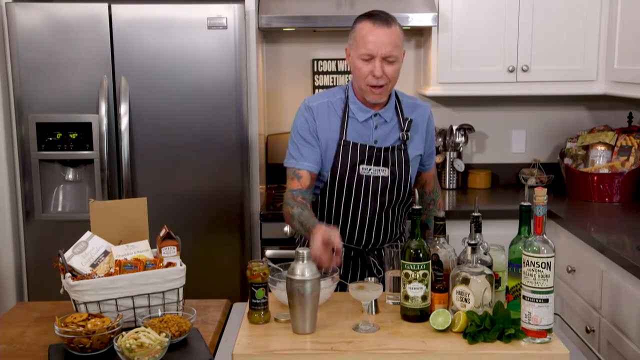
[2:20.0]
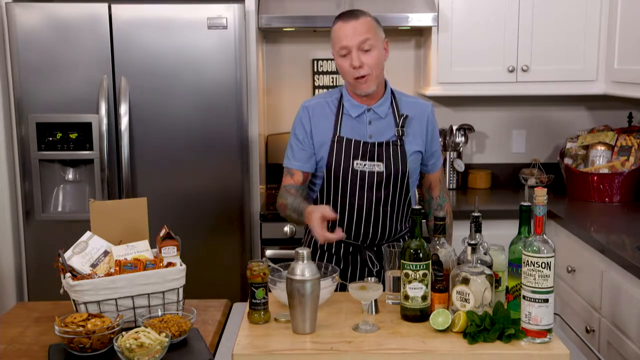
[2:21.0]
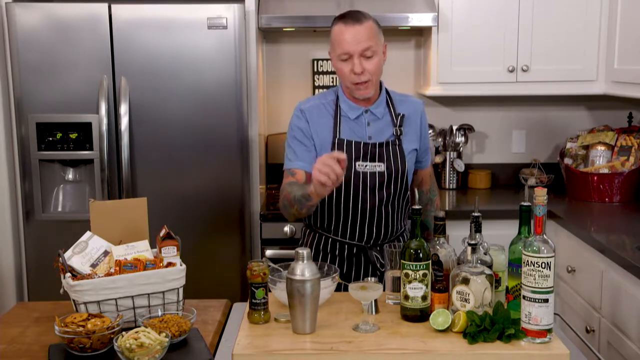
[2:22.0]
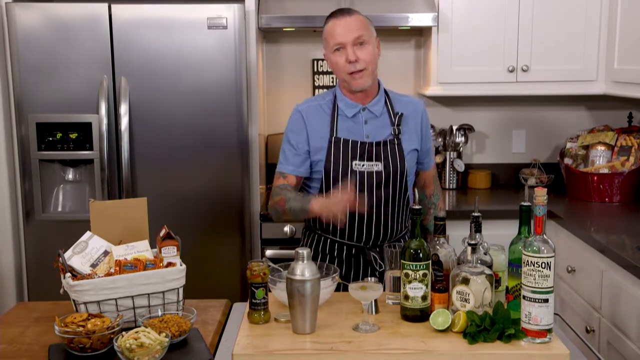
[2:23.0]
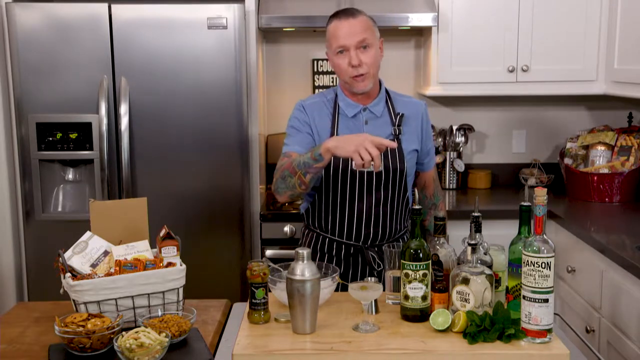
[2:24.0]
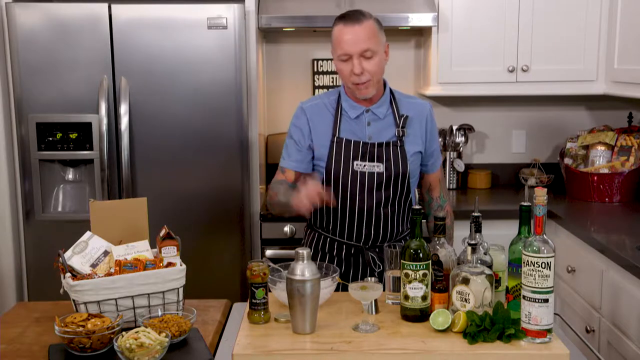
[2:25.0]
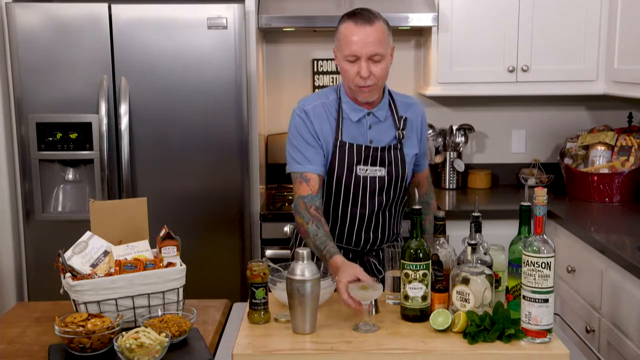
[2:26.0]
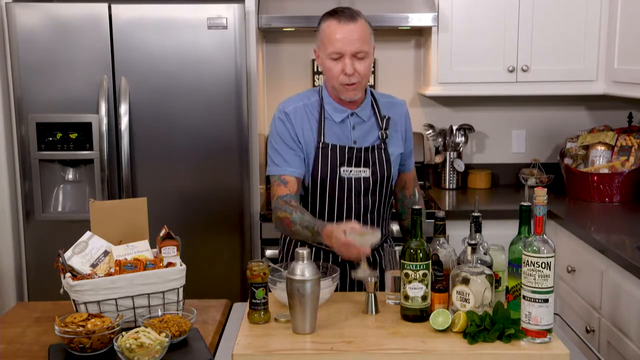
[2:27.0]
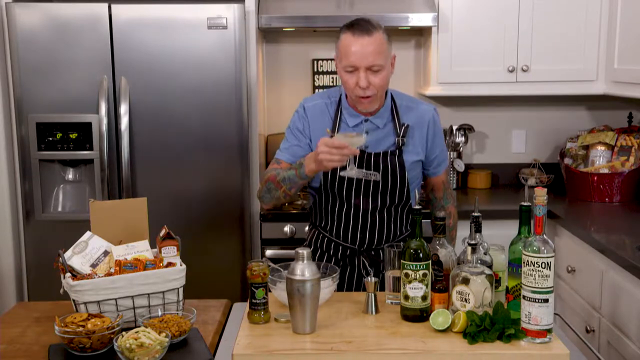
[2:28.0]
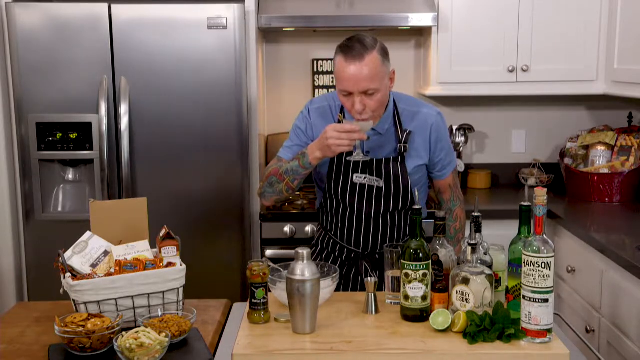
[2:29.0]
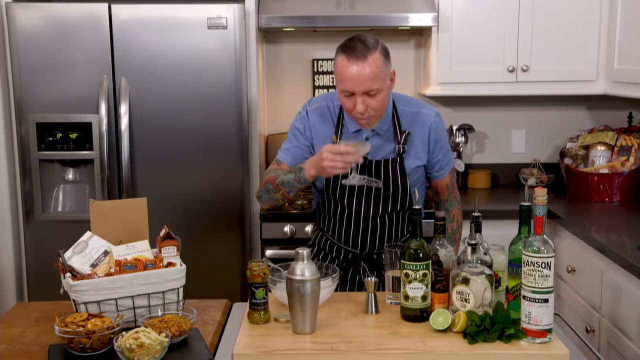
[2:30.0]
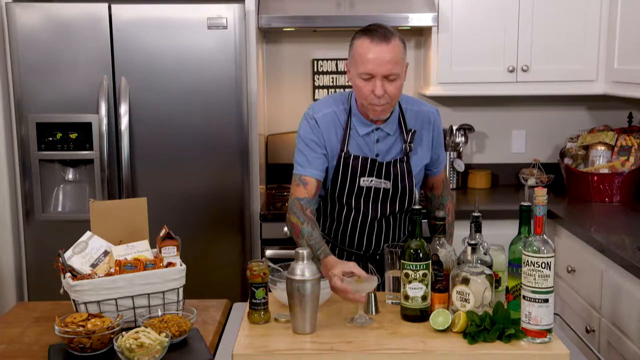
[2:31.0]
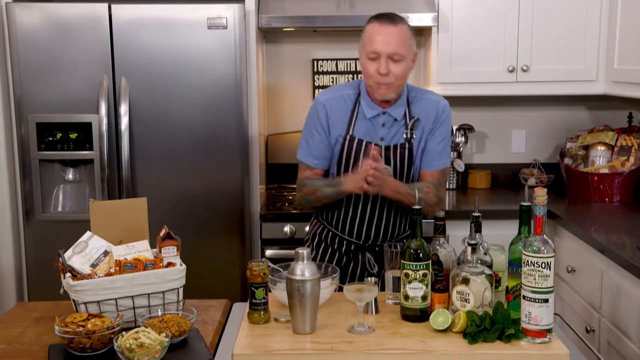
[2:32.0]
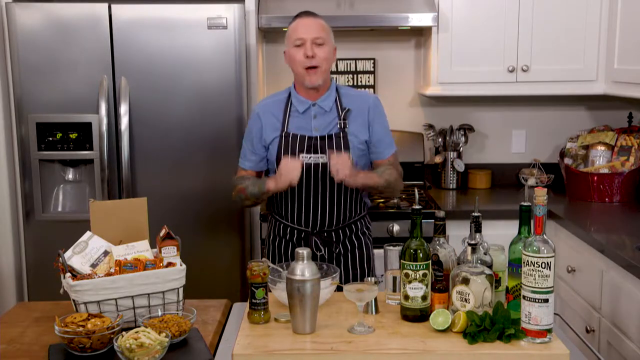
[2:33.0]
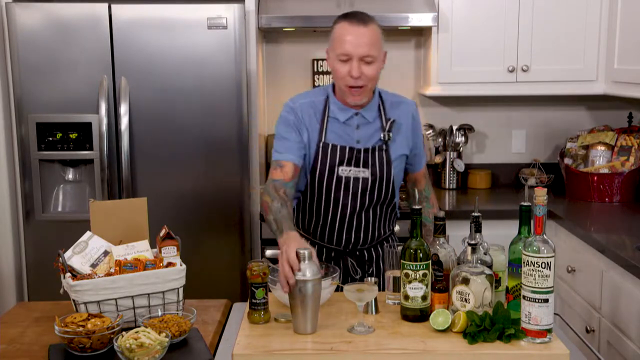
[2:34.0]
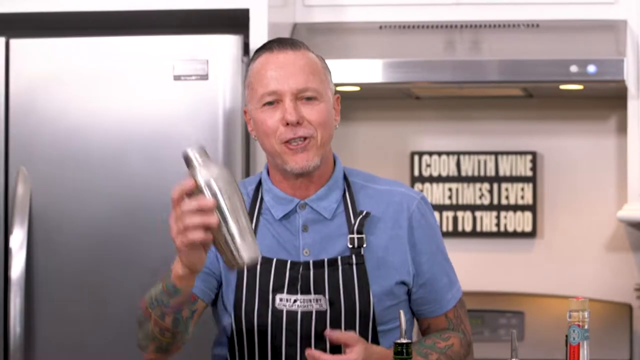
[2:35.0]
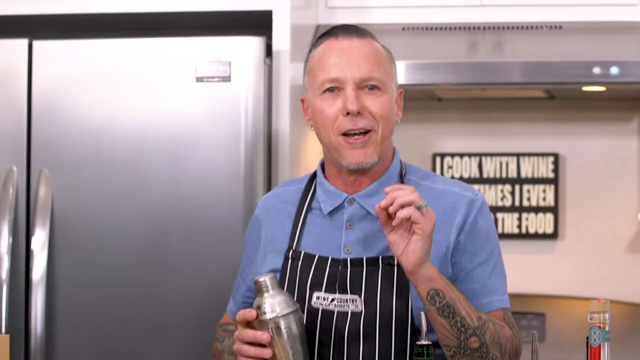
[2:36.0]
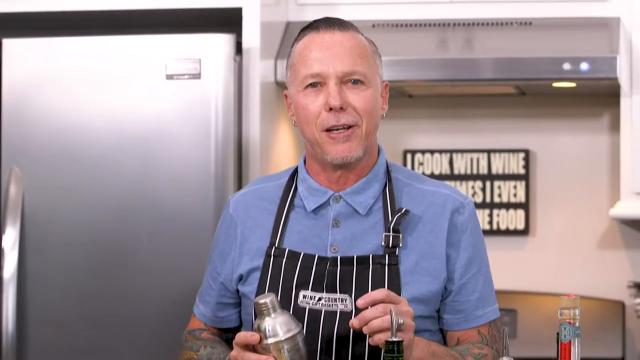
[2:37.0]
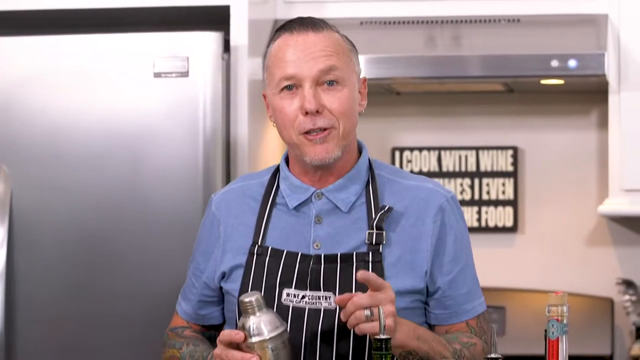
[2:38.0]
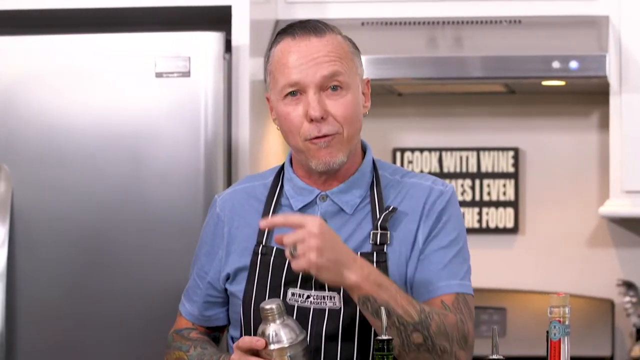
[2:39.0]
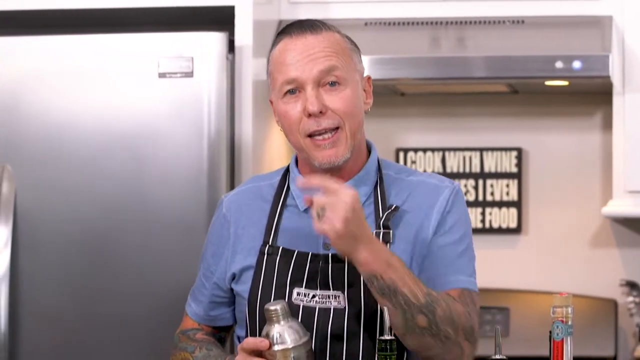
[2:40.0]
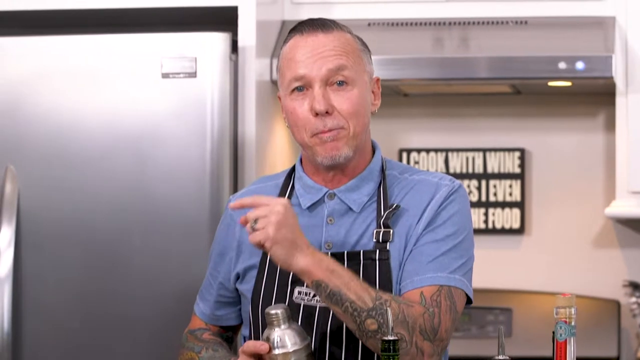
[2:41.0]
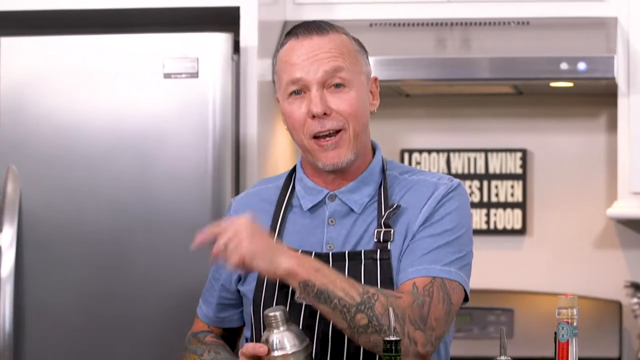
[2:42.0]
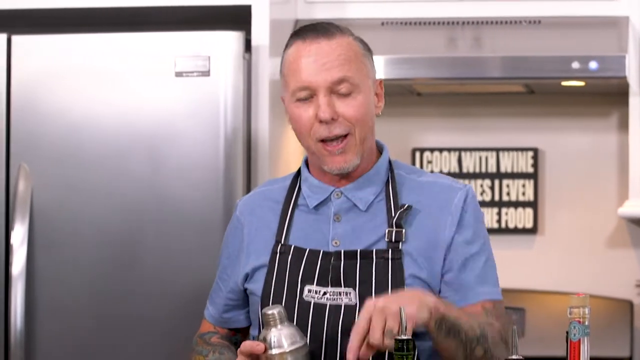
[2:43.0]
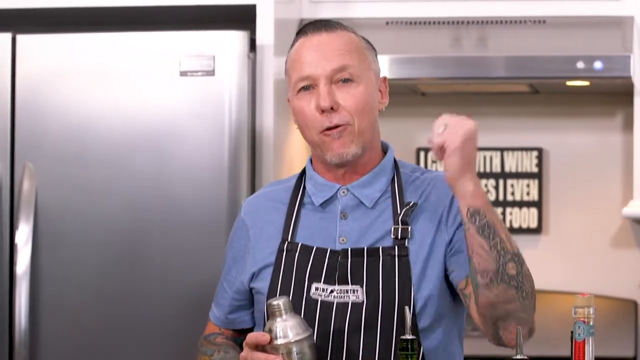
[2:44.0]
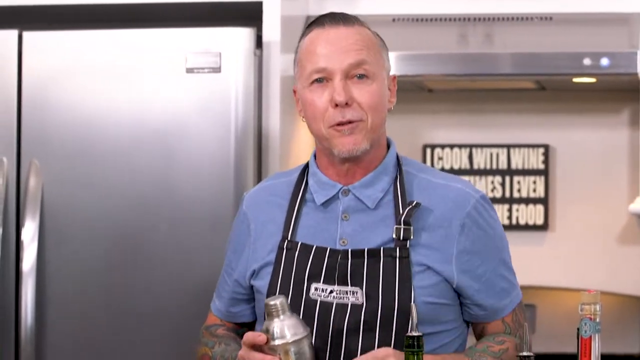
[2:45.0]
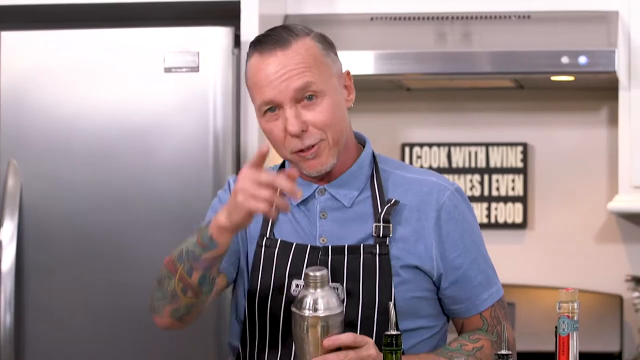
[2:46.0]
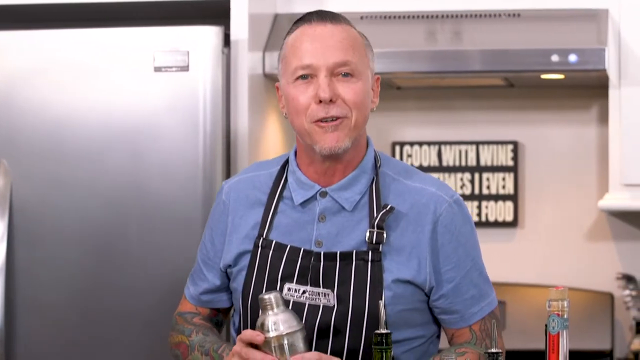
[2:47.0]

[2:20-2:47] The man talks about the cocktail he has just prepared. He picks up the glass and sips it, and afterward looks very happy and proud. He claps his hands together and looks like he is about to jump up and down, then makes fists in excitement. He grabs the silver tumbler again and keeps holding it as he talks, moving toward the front of the fridge. He looks well presented and happy.